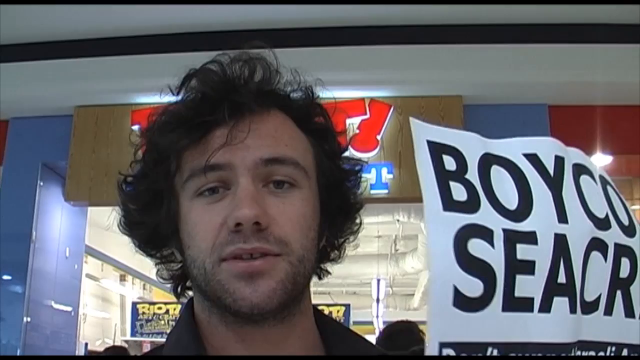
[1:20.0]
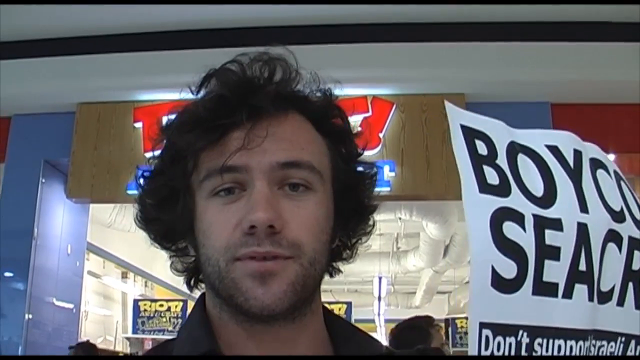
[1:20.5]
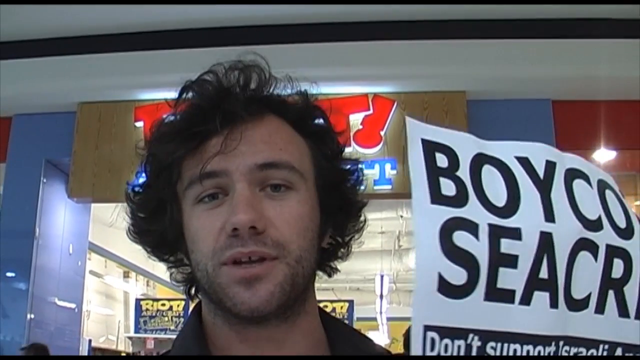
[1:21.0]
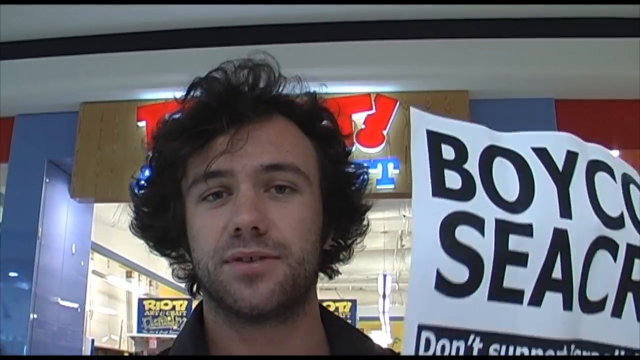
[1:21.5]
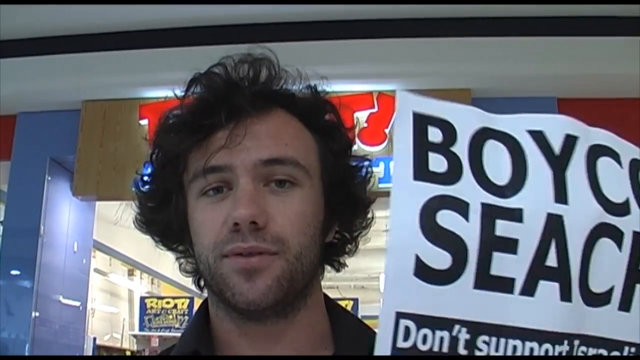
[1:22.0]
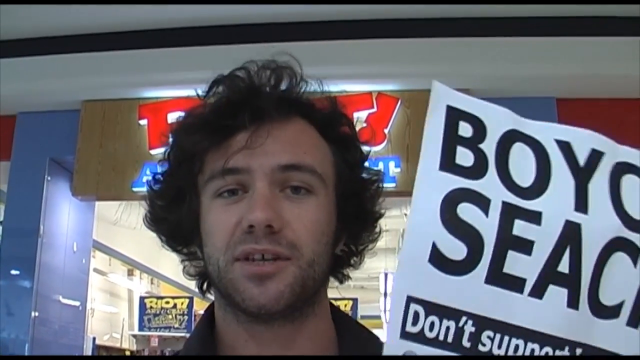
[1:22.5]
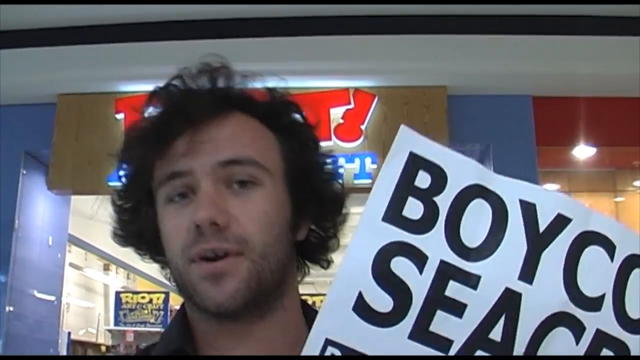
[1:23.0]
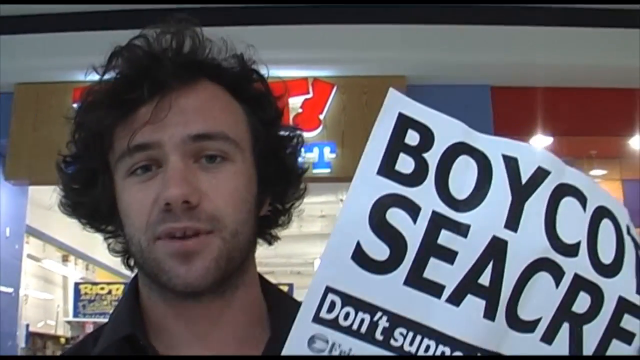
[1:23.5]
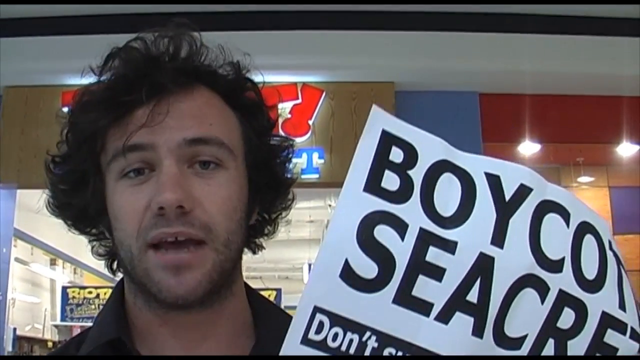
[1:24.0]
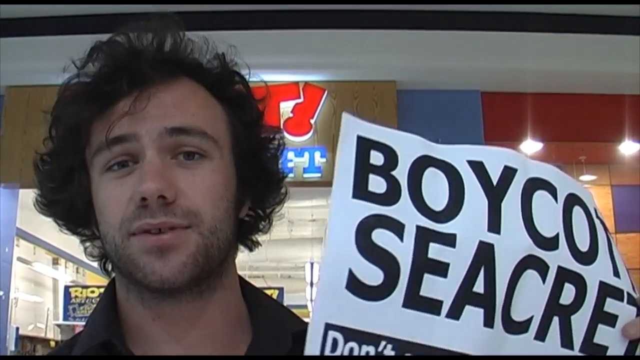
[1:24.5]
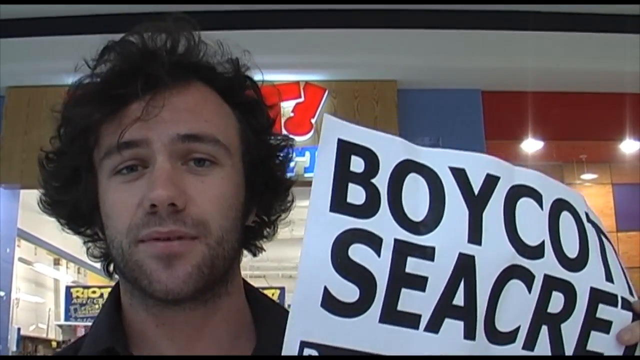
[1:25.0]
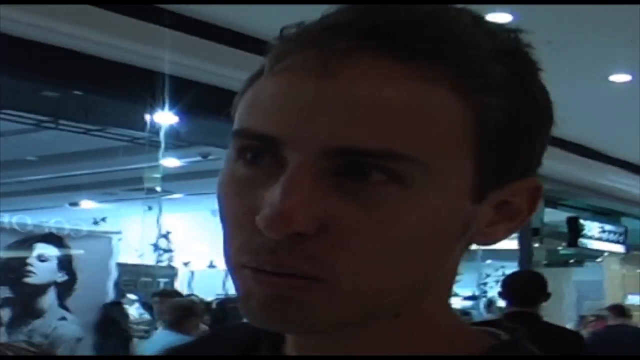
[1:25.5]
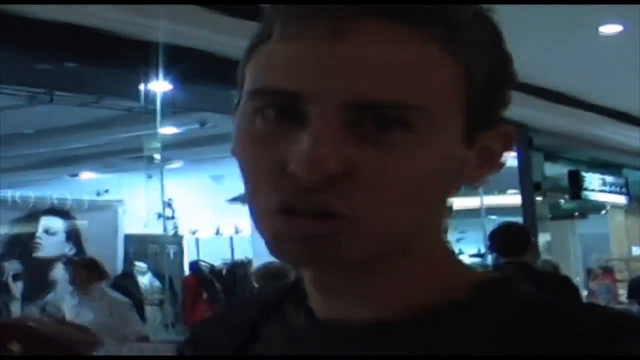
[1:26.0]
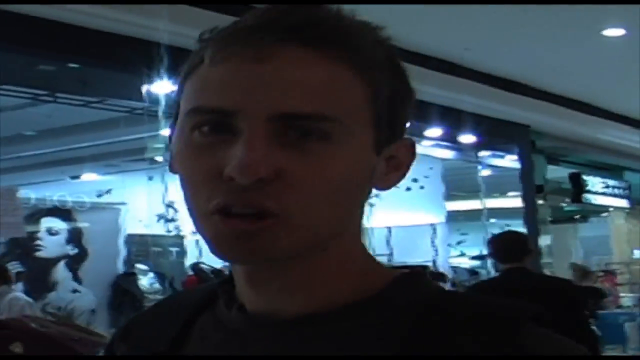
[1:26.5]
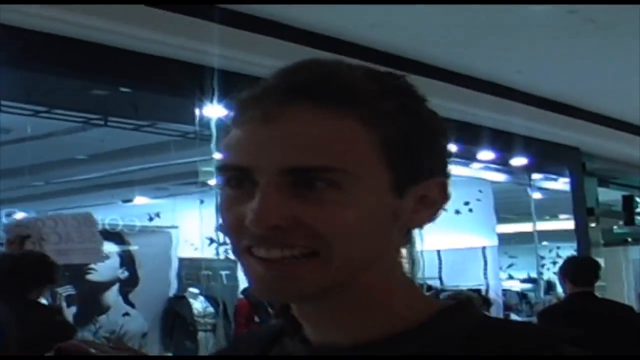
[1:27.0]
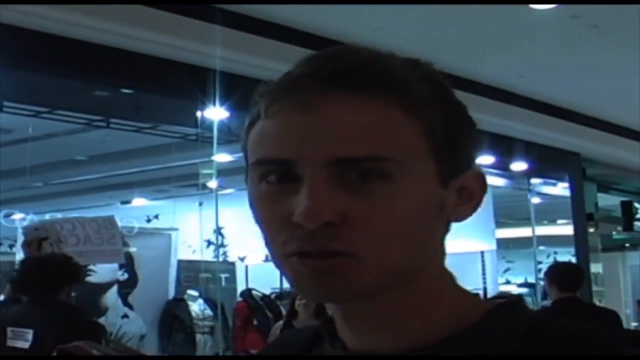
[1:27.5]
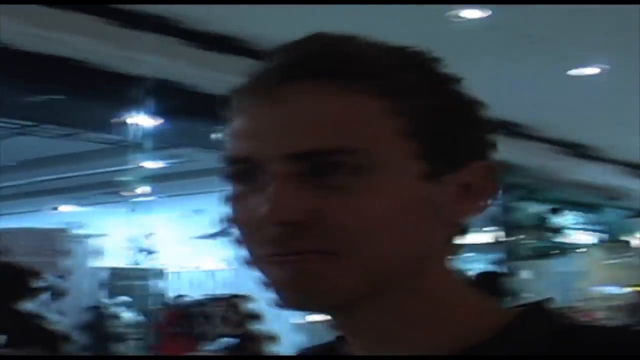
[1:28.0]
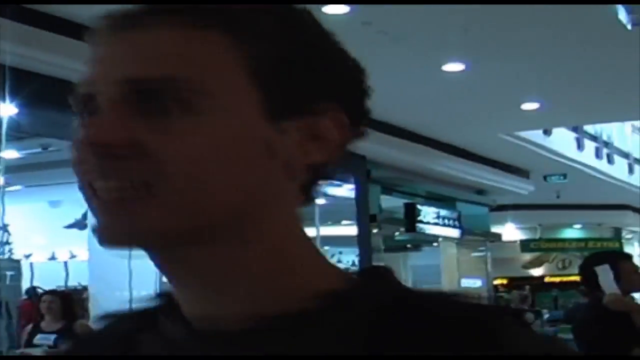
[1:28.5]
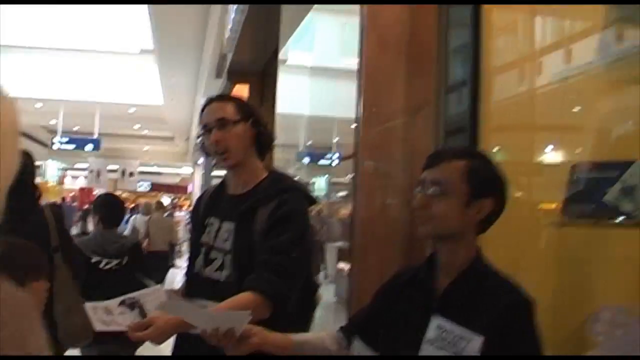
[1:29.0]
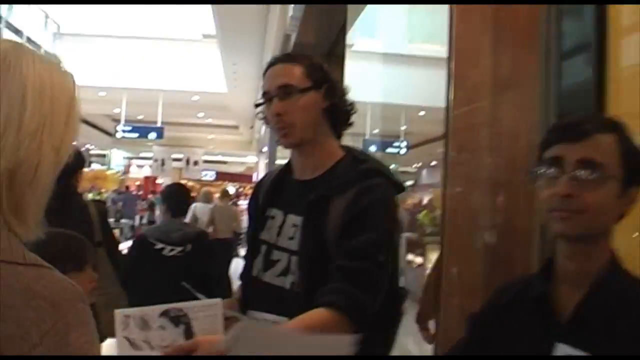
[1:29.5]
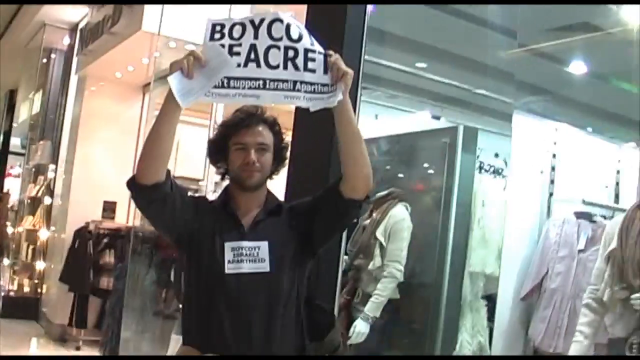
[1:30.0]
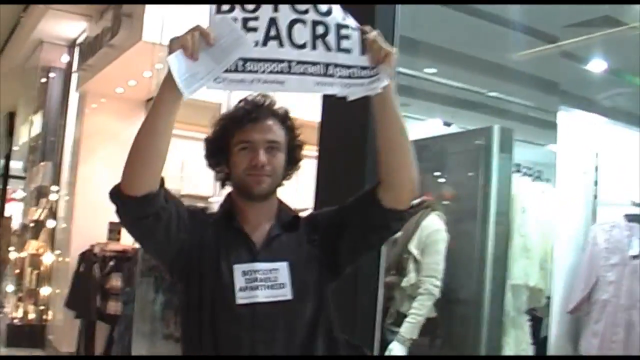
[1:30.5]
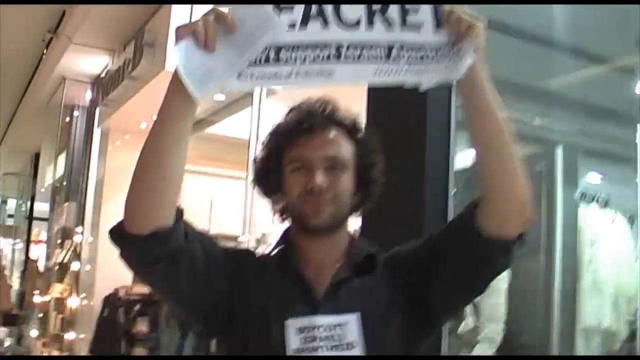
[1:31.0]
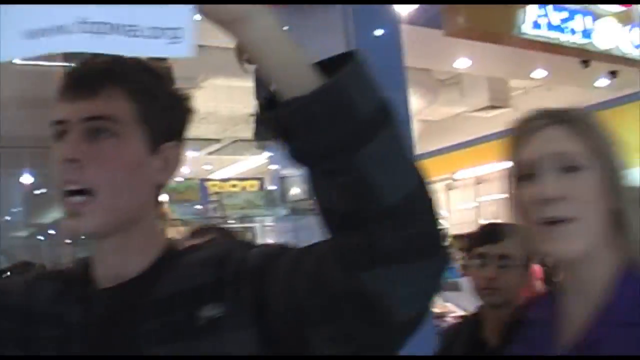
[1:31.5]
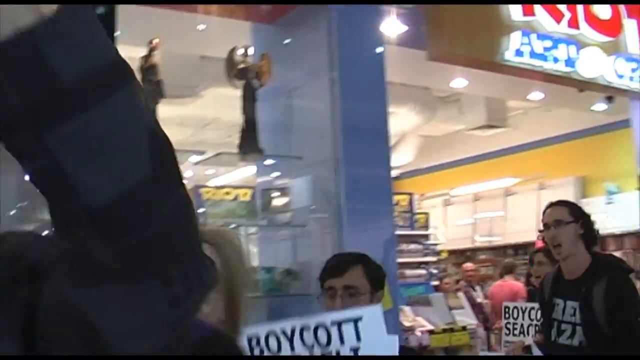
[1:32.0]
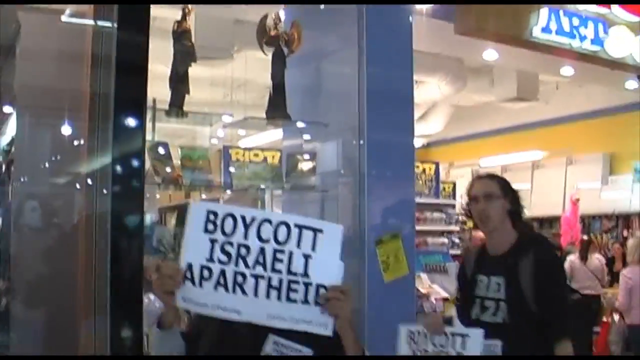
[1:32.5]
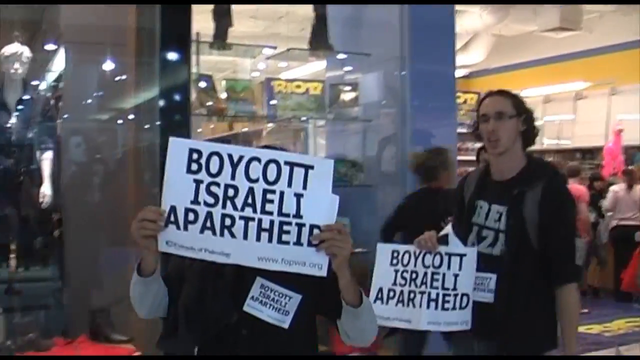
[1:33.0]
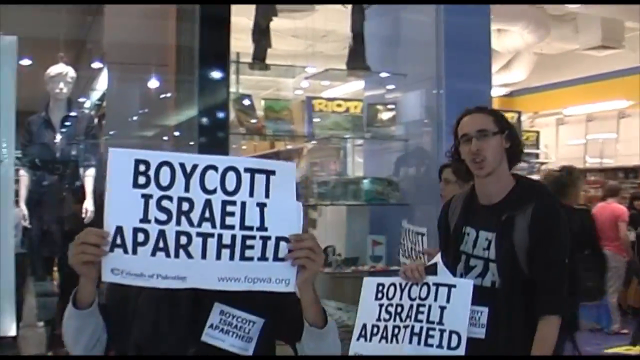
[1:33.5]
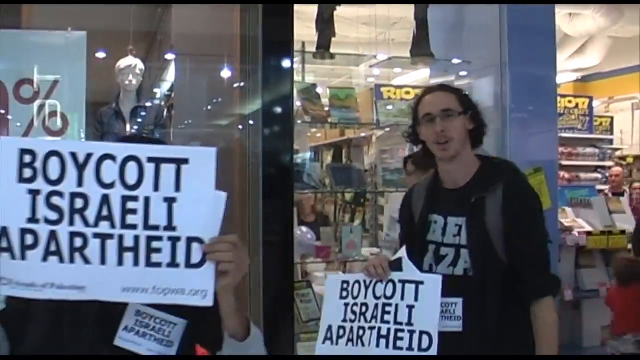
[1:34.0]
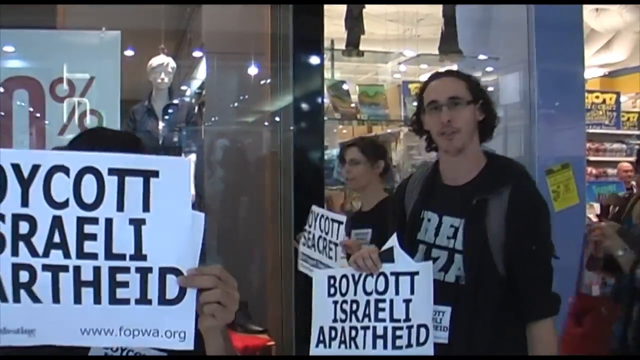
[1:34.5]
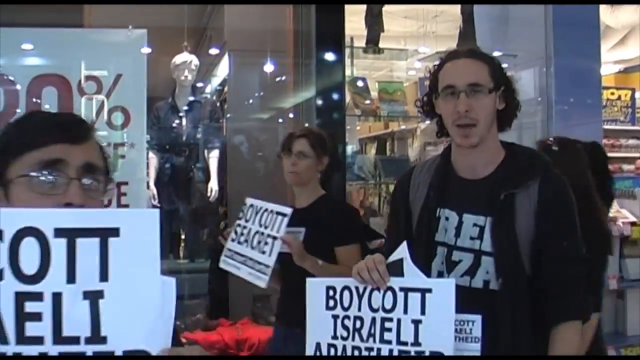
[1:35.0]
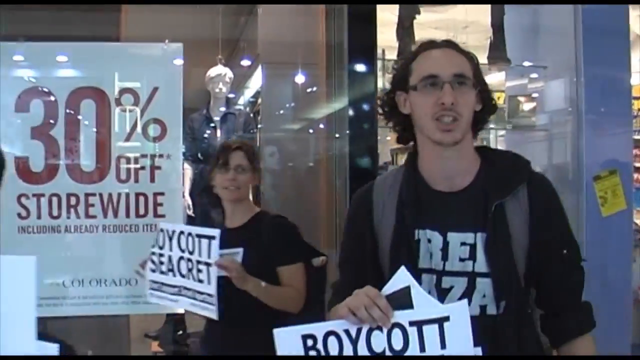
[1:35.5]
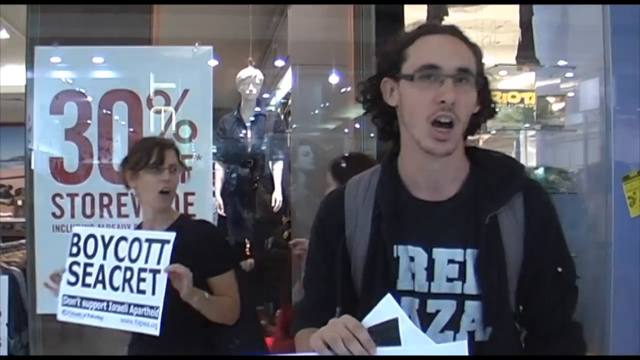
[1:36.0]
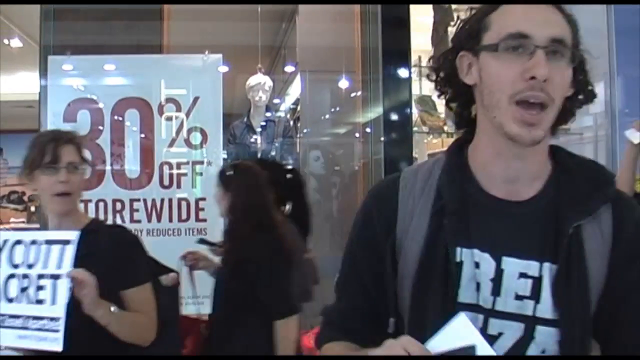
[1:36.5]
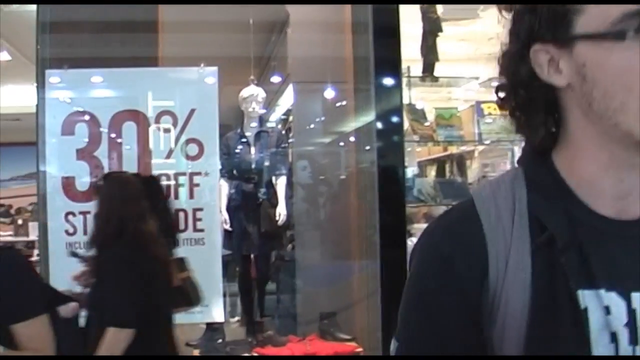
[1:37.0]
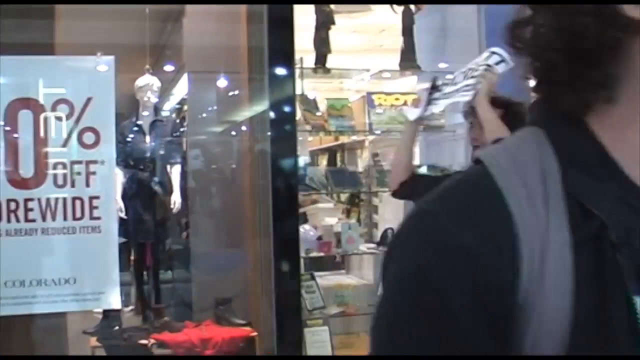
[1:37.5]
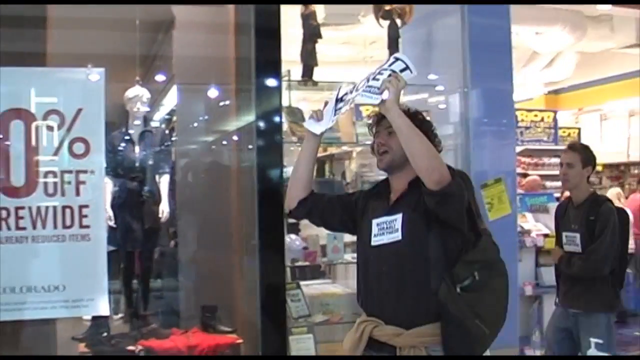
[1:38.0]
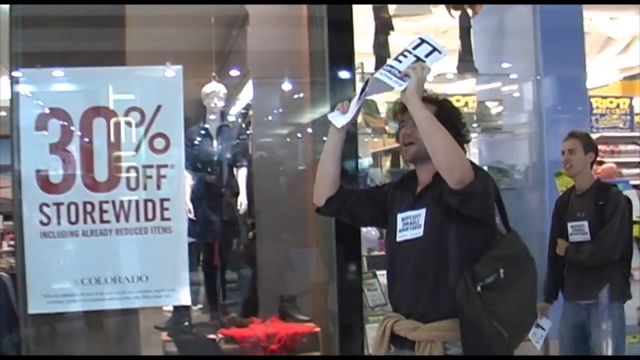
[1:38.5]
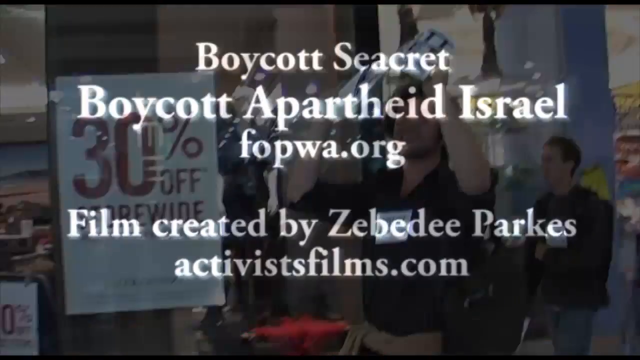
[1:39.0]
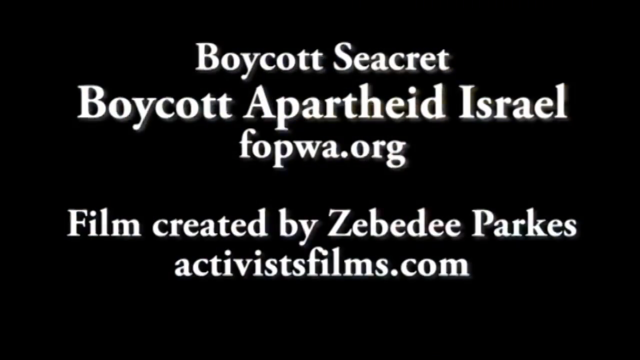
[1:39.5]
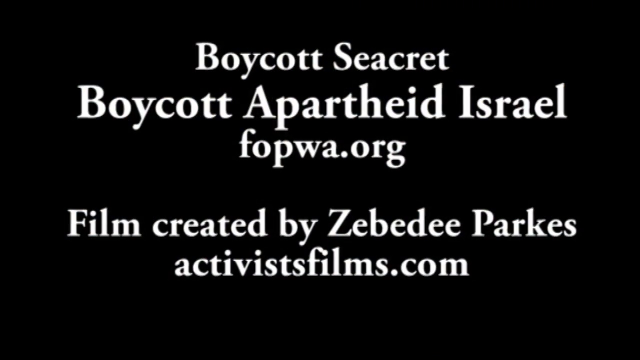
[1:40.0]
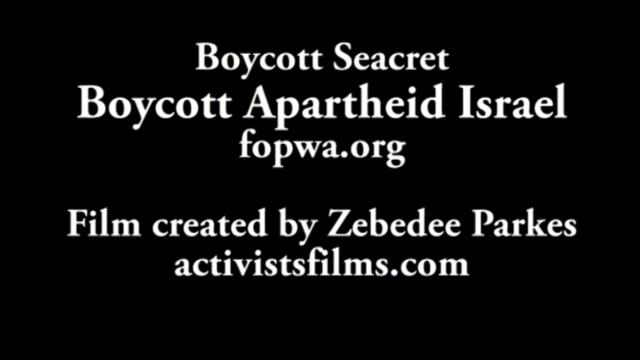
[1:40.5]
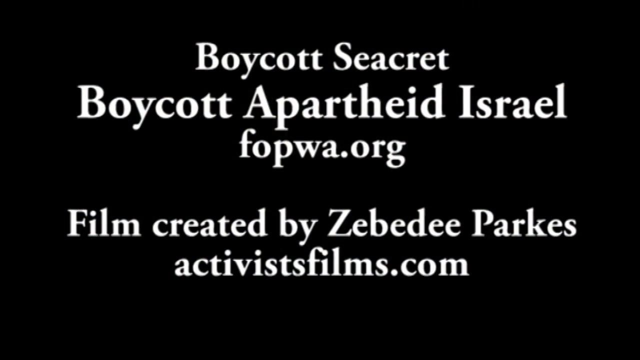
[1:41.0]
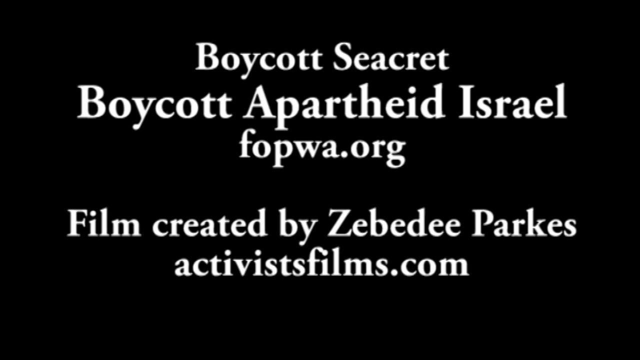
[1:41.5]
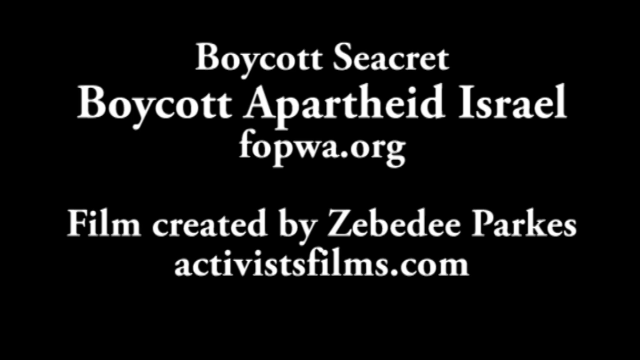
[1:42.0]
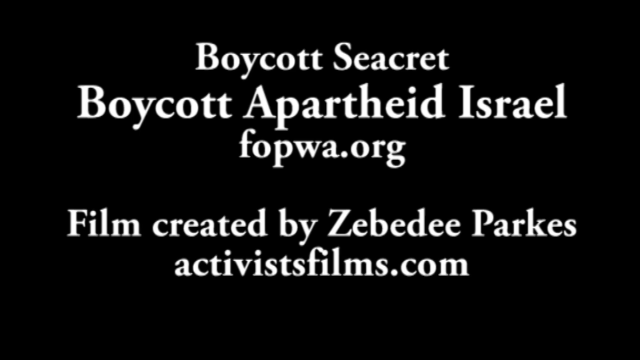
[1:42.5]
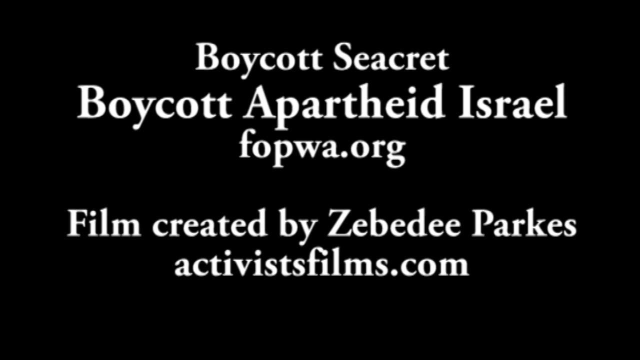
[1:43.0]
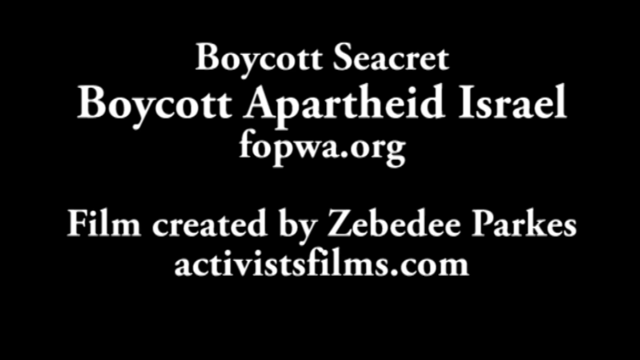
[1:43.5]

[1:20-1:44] The small protest takes place in a retail mall, with placards reading "boycott Seacrest" and "boycott Israeli apartheid." On-screen text reads "boycott secret," "boycott apartheid Israel," and "film created by Zabiti Parkez," identifying it as a protest film. There appear to be as many as ten people involved in the protest.